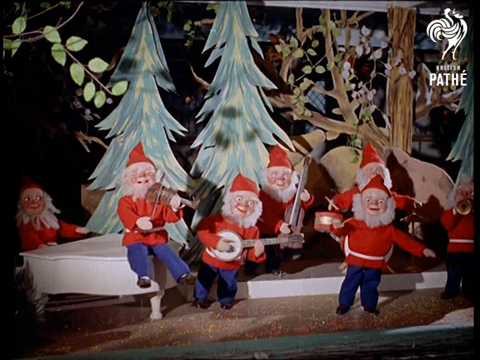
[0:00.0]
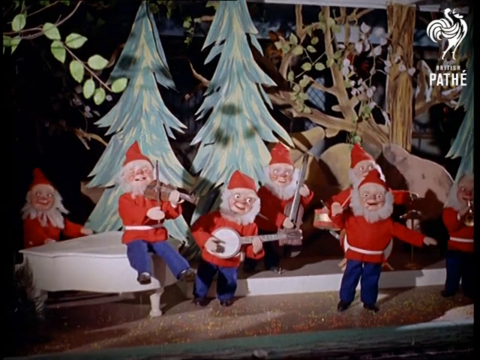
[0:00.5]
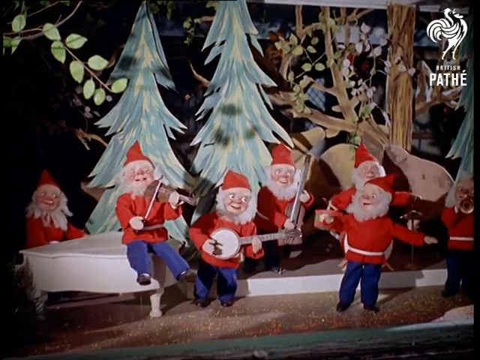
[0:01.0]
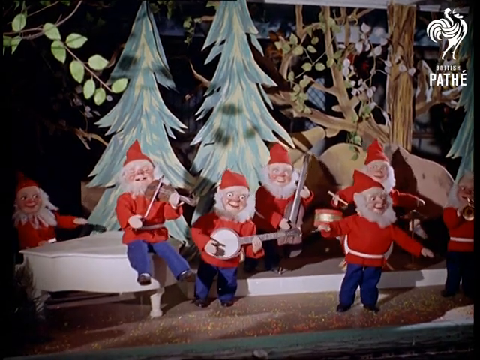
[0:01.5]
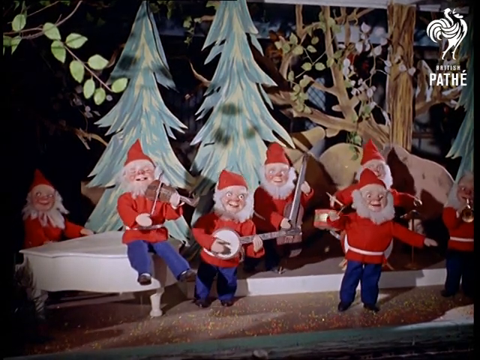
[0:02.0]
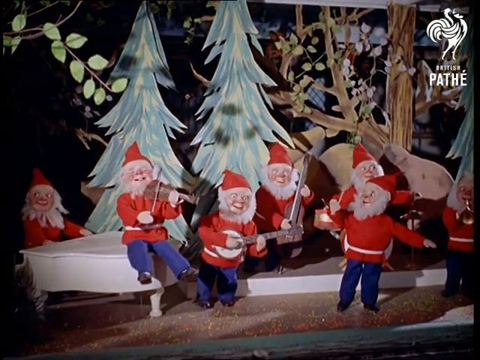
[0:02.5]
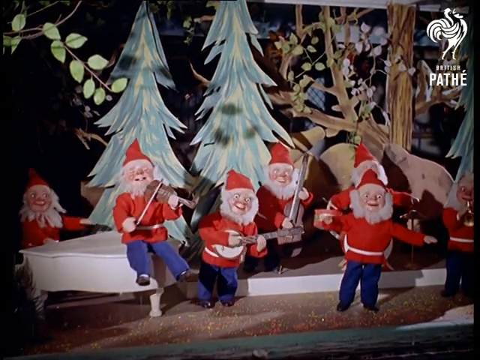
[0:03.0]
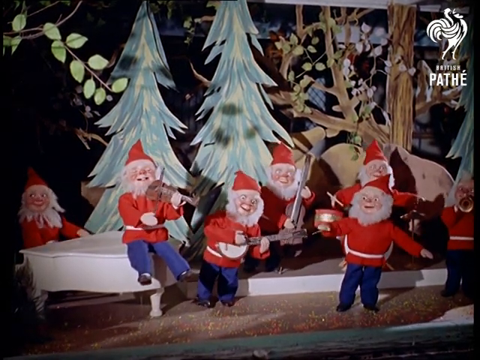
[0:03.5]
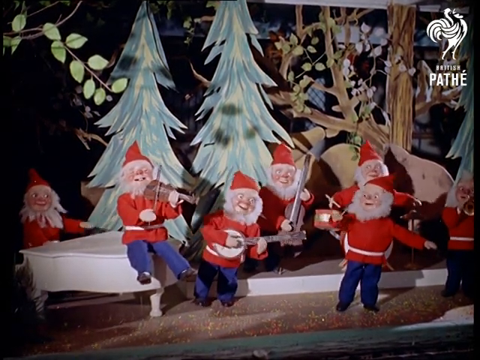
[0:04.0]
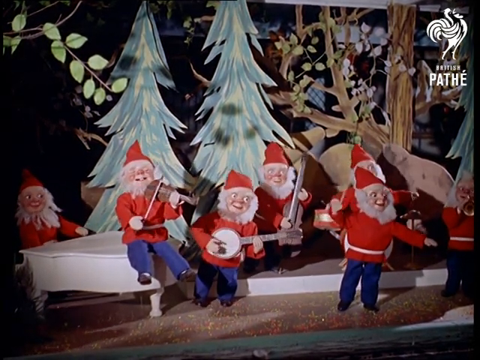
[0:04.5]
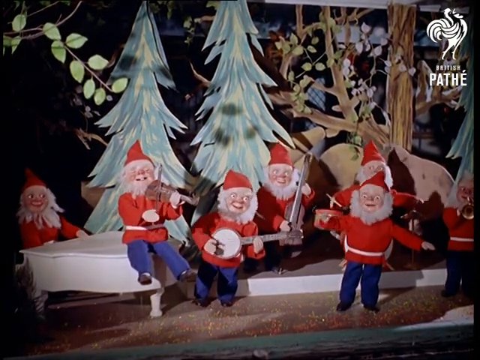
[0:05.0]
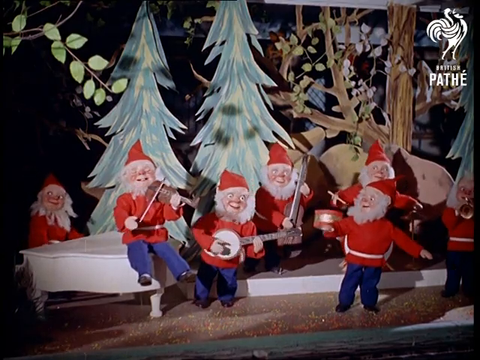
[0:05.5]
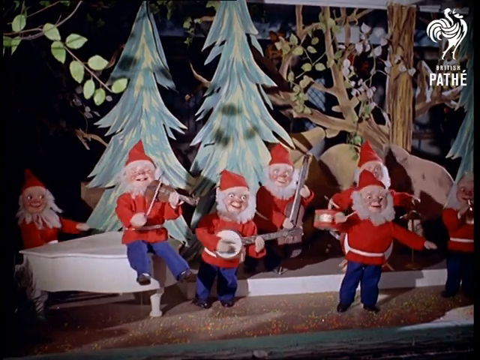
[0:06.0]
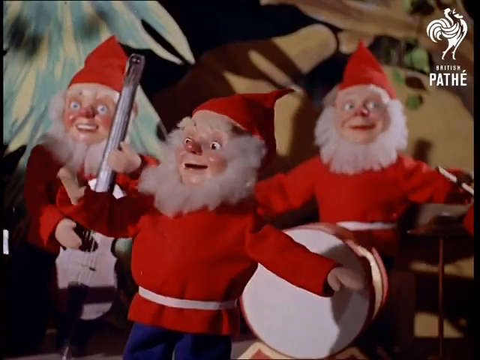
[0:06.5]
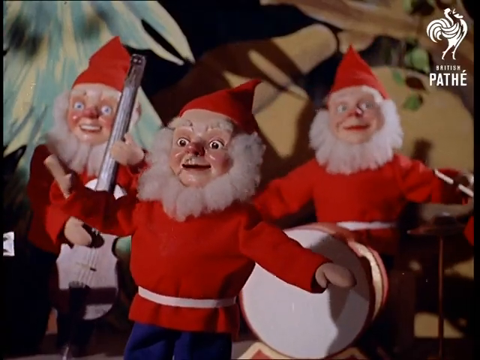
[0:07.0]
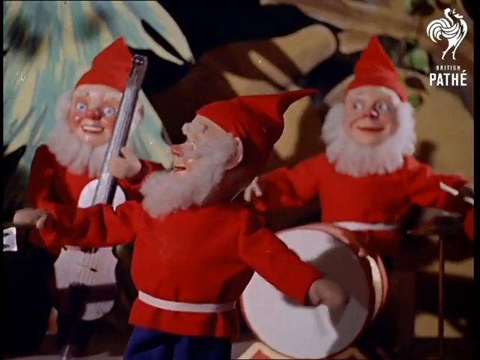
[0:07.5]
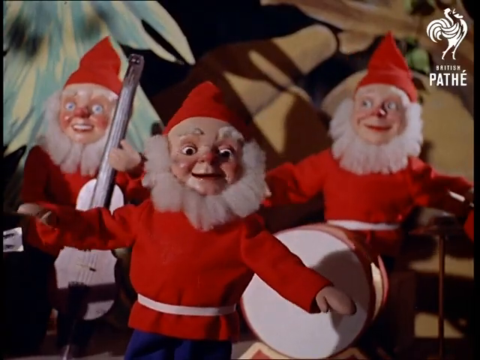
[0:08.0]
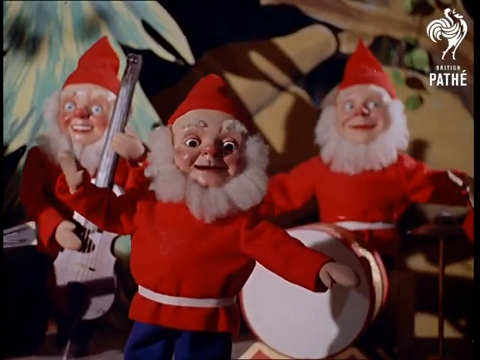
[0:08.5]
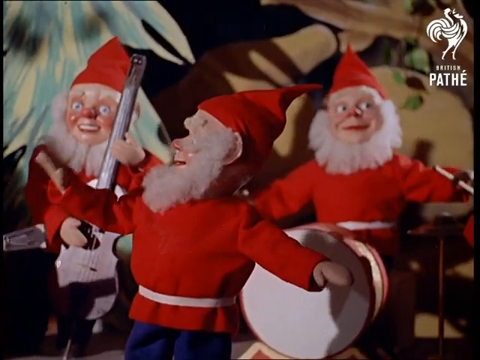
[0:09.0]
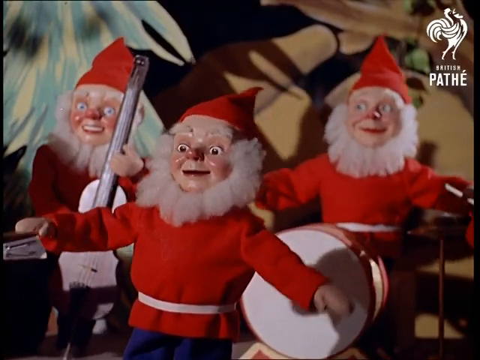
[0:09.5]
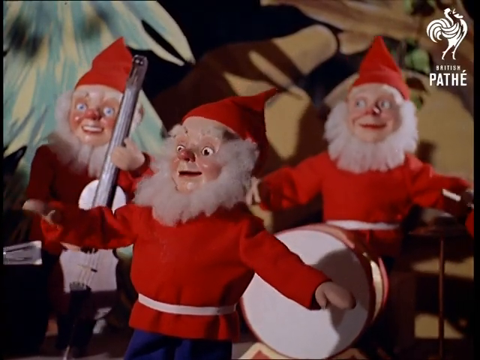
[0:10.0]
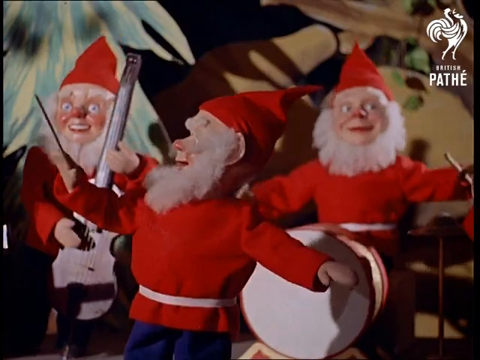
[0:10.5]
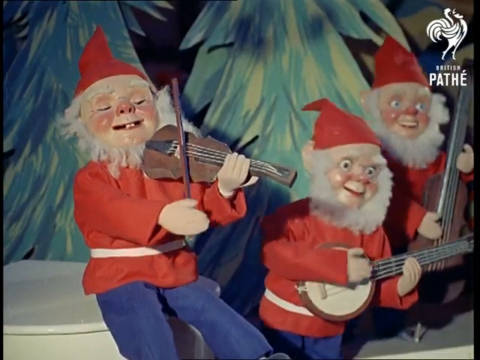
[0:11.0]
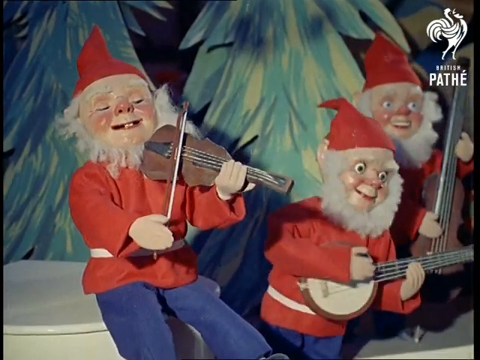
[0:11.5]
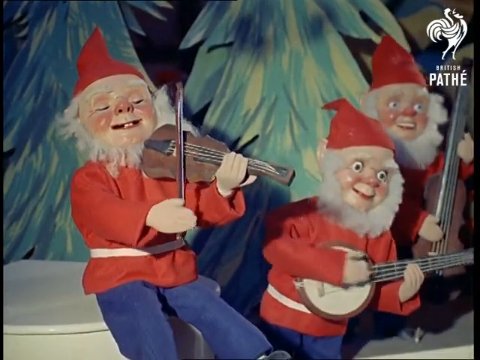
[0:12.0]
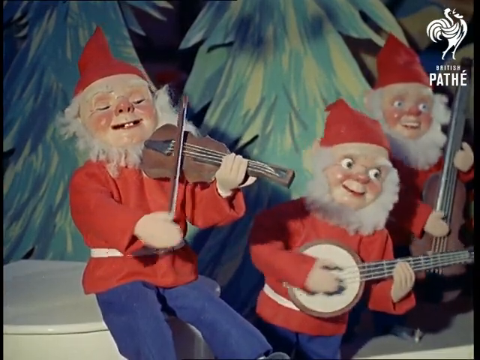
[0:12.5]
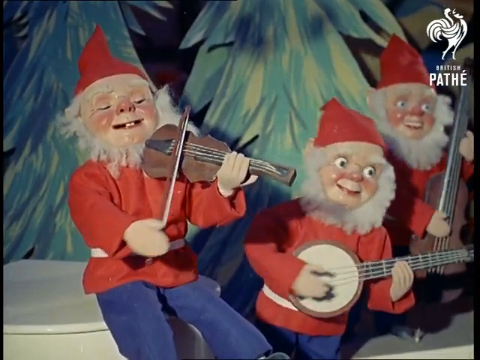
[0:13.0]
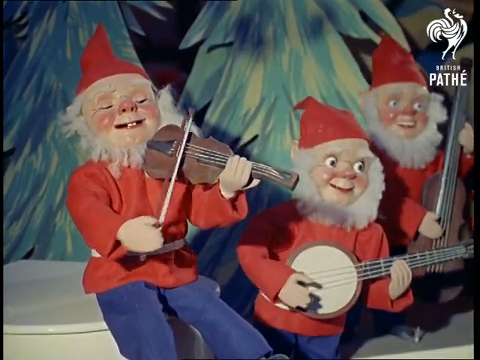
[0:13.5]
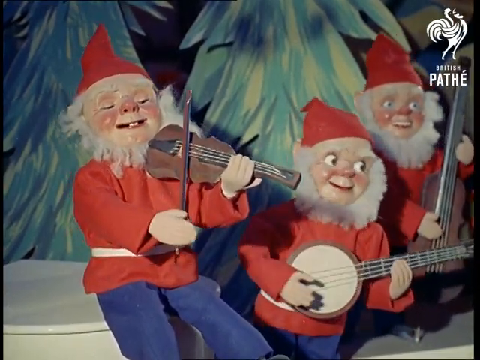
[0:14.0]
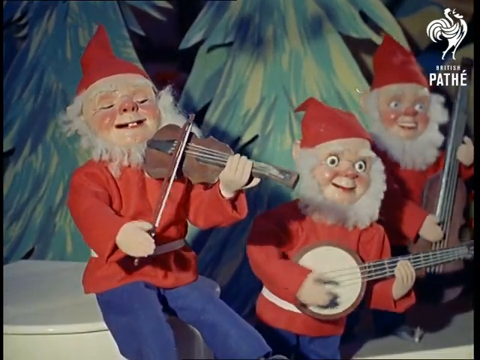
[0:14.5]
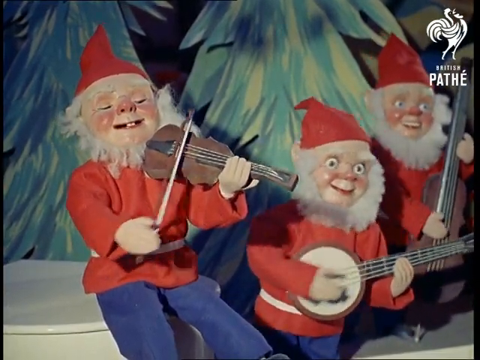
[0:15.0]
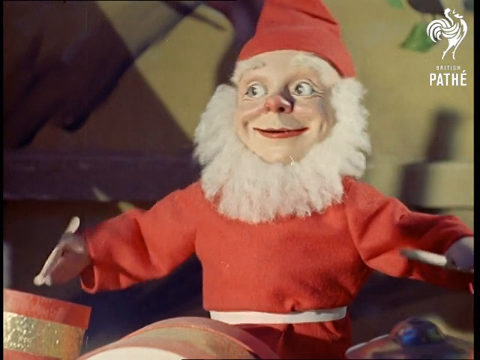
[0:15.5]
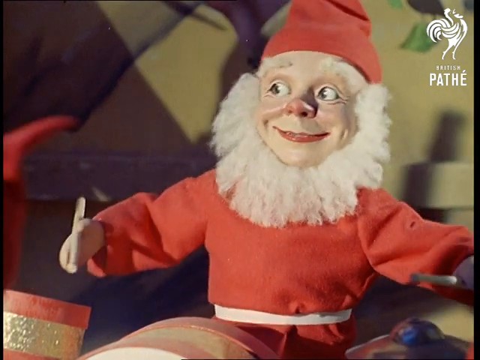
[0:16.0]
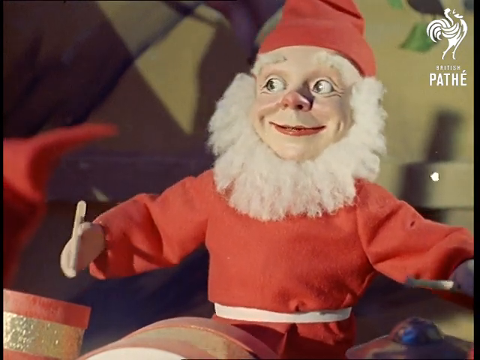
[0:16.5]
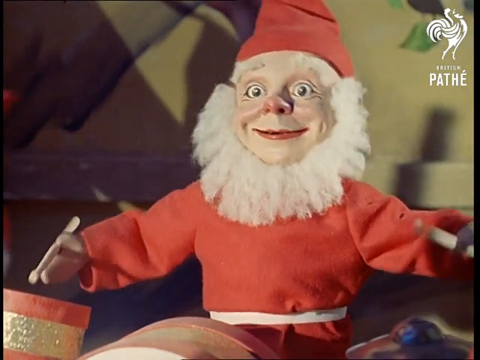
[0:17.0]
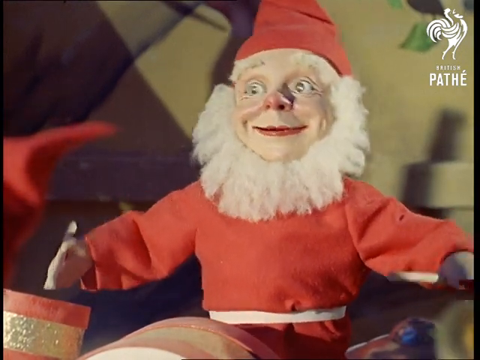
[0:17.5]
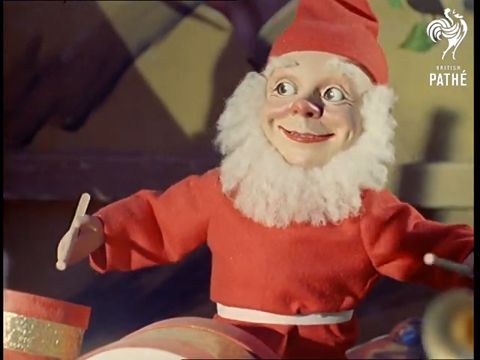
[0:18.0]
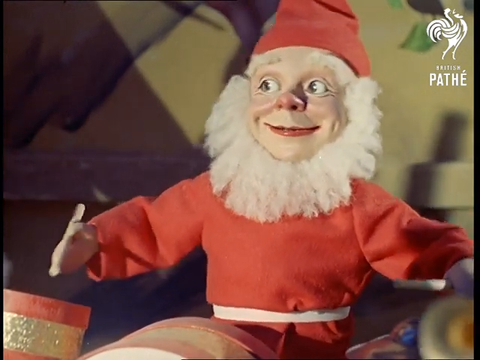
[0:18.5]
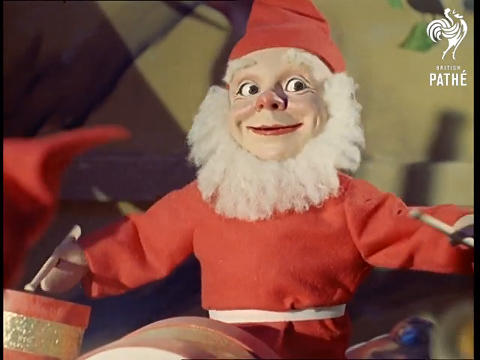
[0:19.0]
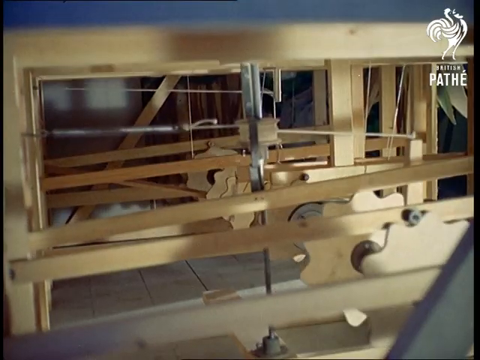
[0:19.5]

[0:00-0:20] The video seems to be a 1980s-style show. Many small toy-shaped Santa figures, which also look similar to small dwarves or maybe small genies, play different instruments. One on the far right plays a saxophone, and in the background others play instruments such as something like a guitar, a violin and a piano, while one of them sings. Their movements are sort of static and repetitive, like an animation or similar to a puppet show, and they seem to be singing a song together. Paper-cut trees, including pine trees and other types of trees, are in the background. It is all a small setup in which these small figures move and make music. They all seem to wear the same type of uniform: a red T-shirt, blue pants and white belts.